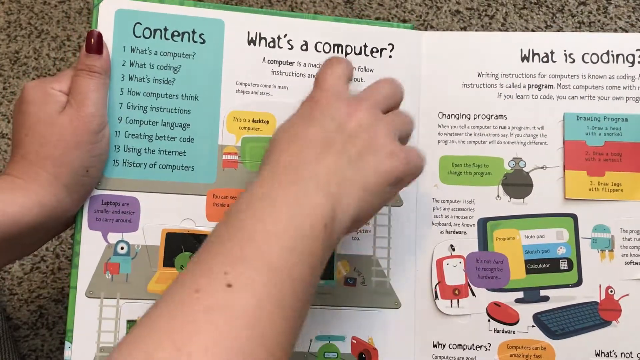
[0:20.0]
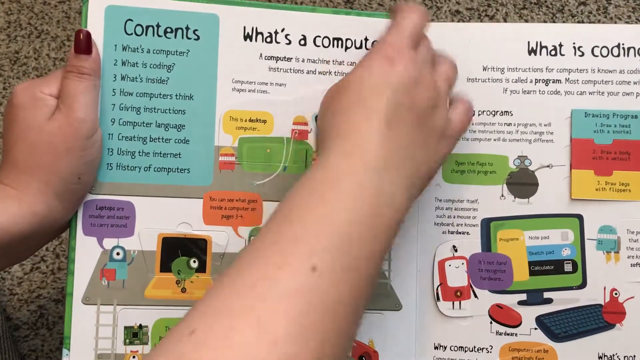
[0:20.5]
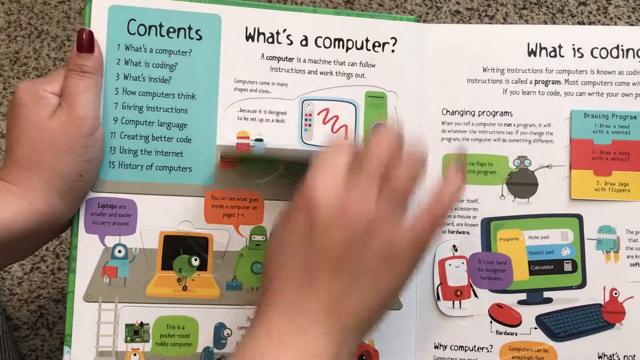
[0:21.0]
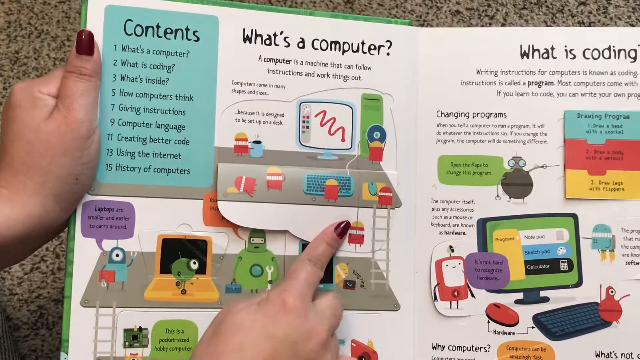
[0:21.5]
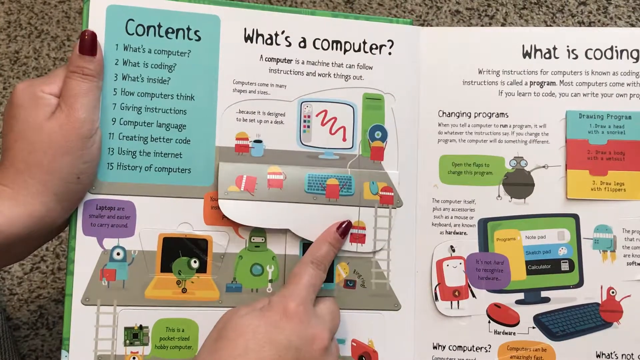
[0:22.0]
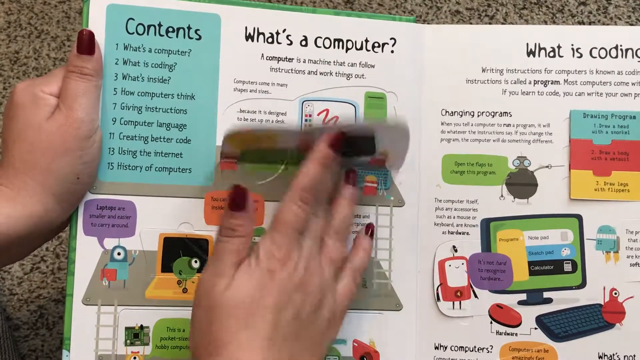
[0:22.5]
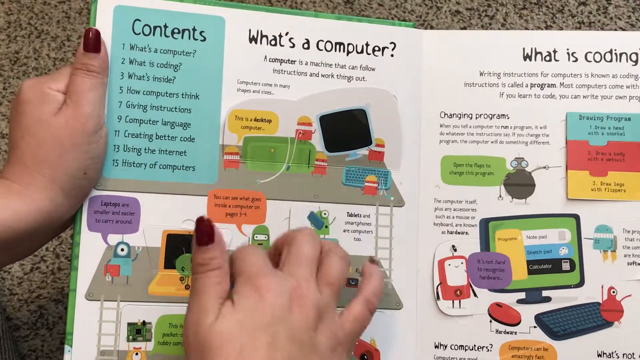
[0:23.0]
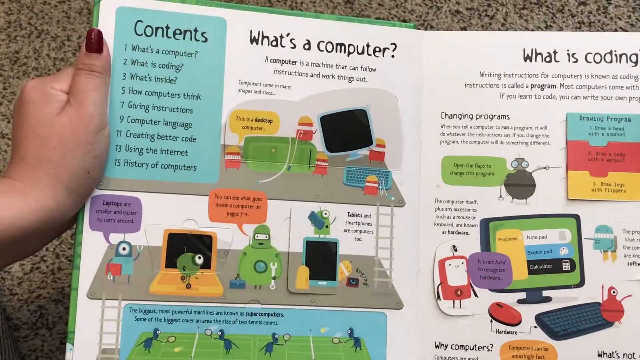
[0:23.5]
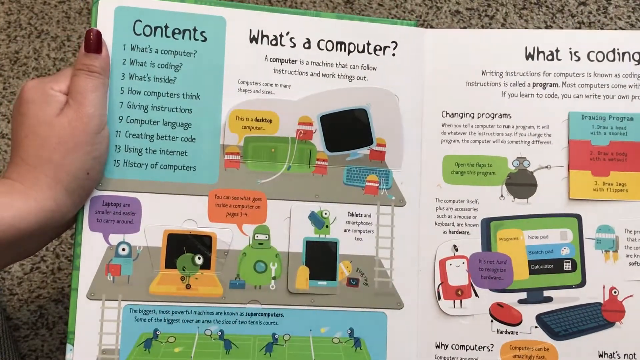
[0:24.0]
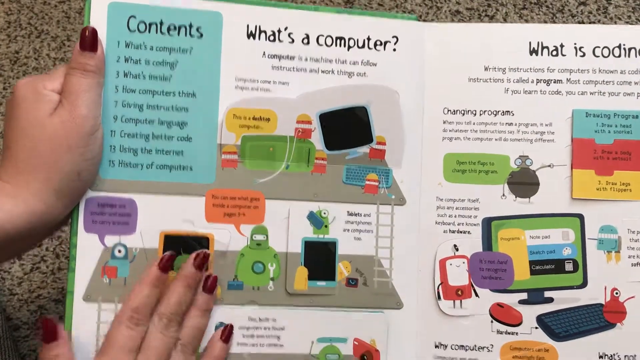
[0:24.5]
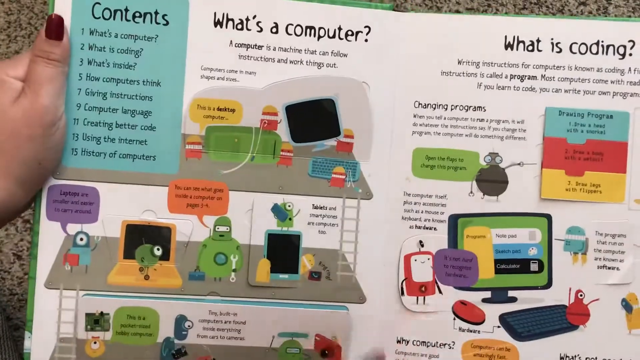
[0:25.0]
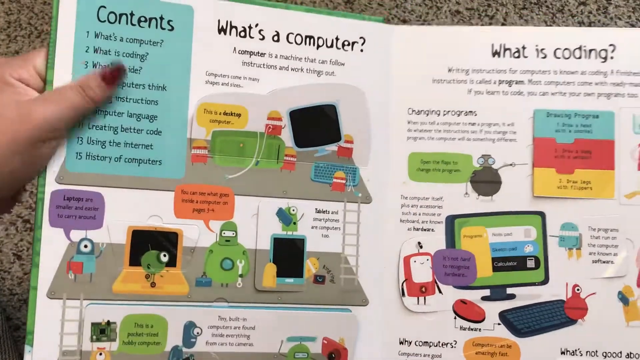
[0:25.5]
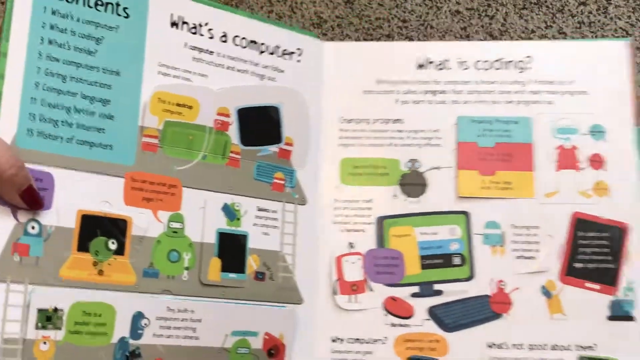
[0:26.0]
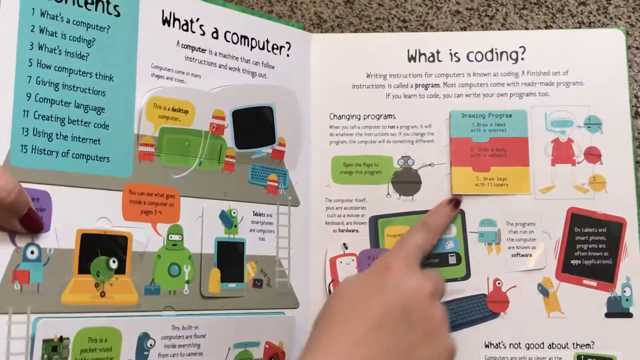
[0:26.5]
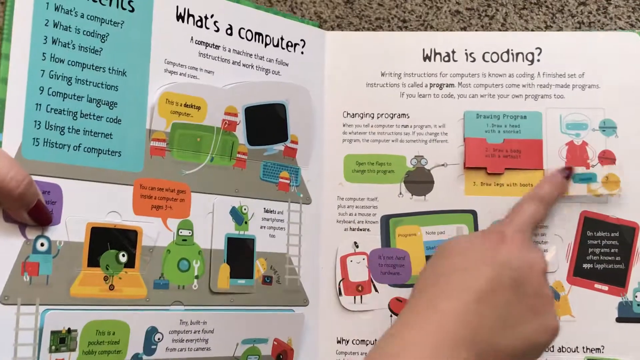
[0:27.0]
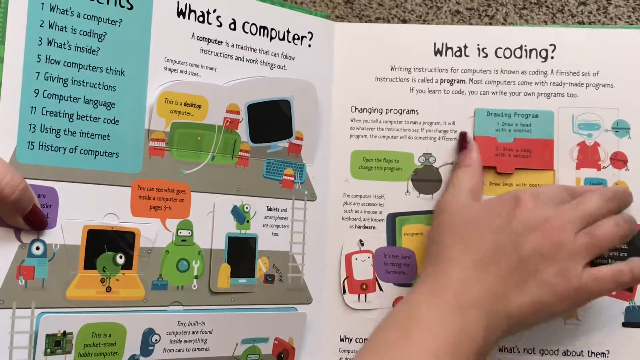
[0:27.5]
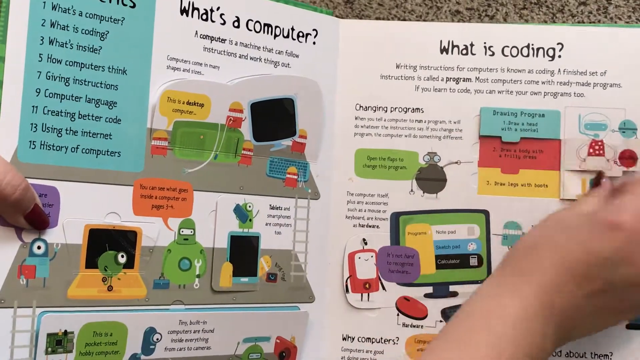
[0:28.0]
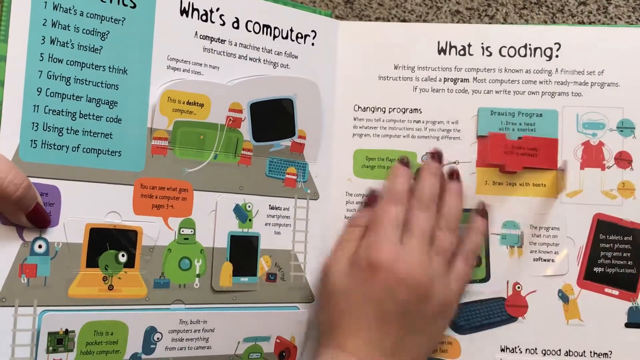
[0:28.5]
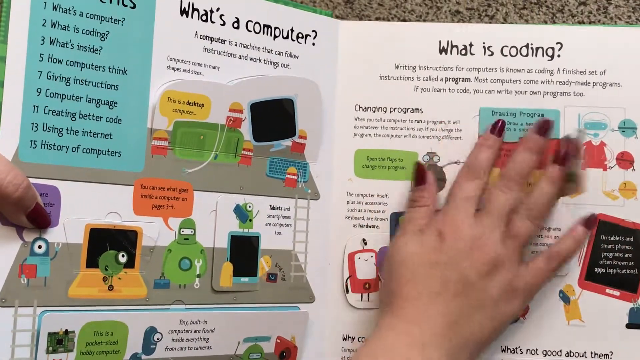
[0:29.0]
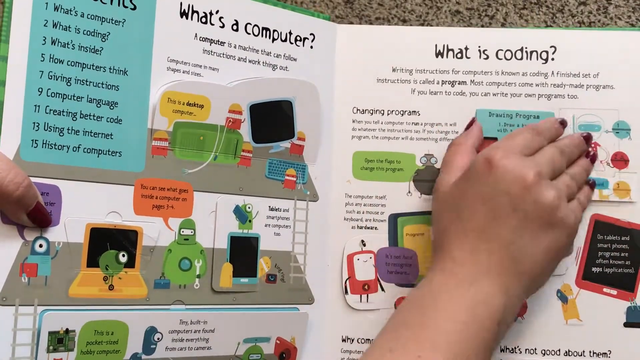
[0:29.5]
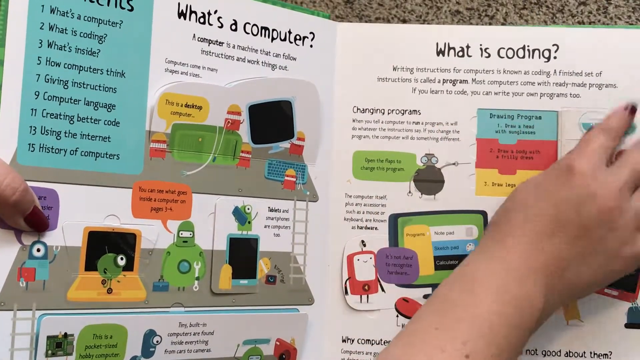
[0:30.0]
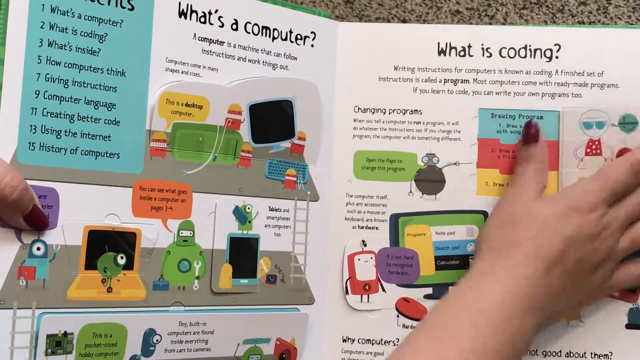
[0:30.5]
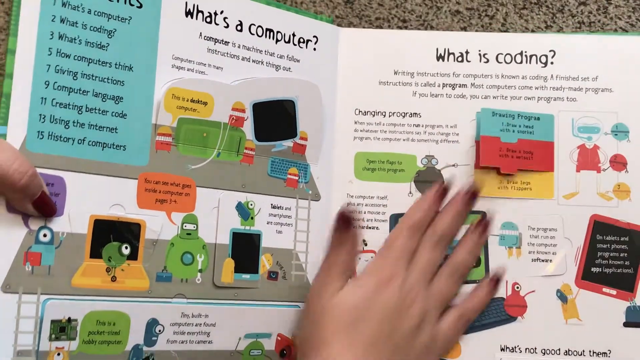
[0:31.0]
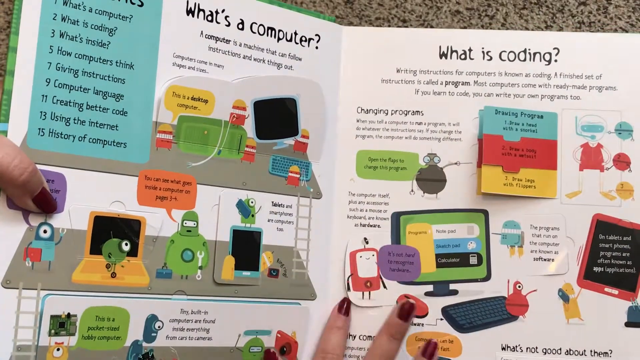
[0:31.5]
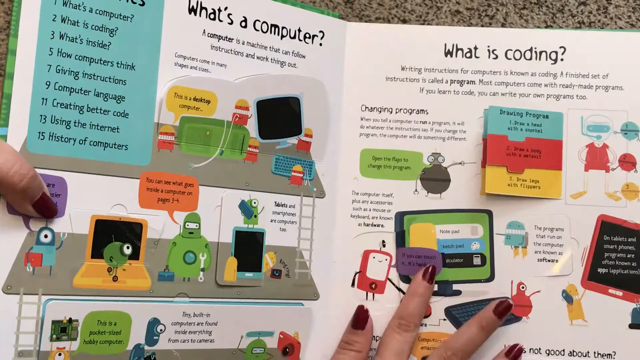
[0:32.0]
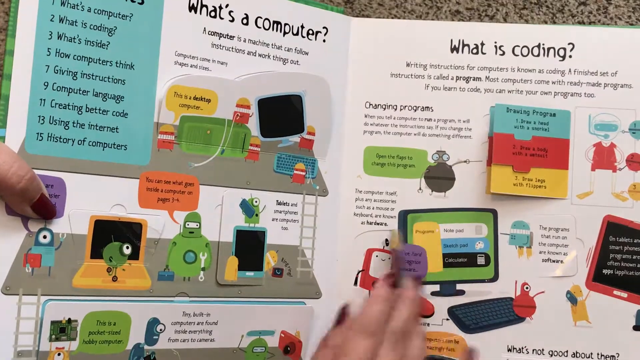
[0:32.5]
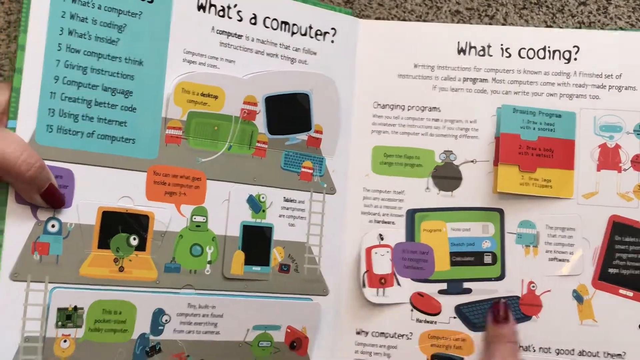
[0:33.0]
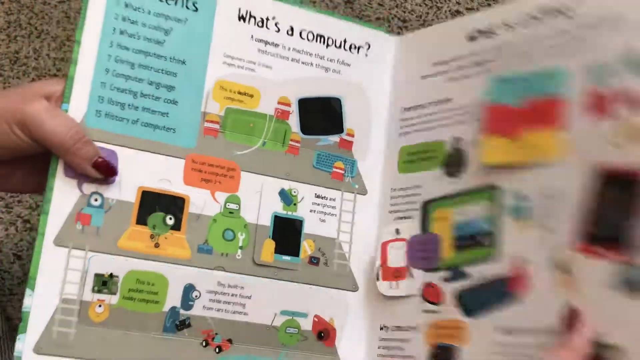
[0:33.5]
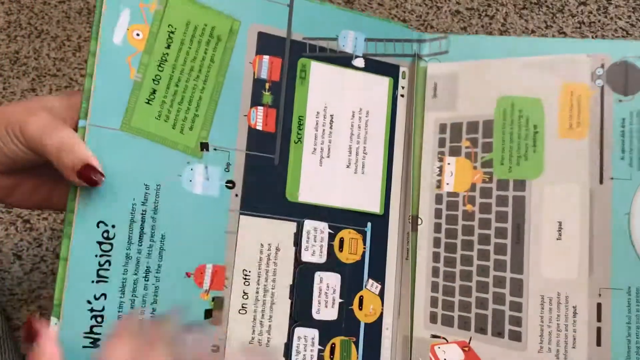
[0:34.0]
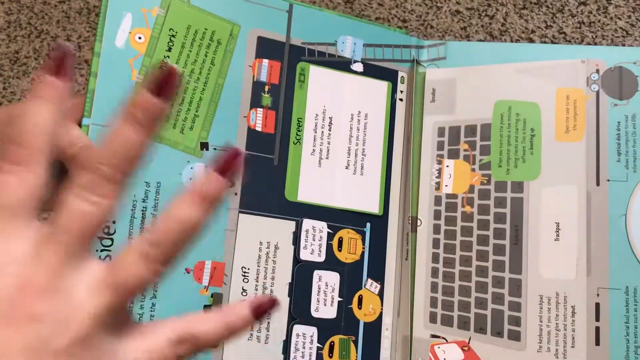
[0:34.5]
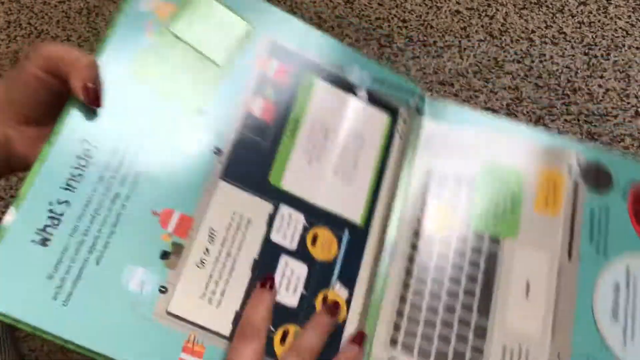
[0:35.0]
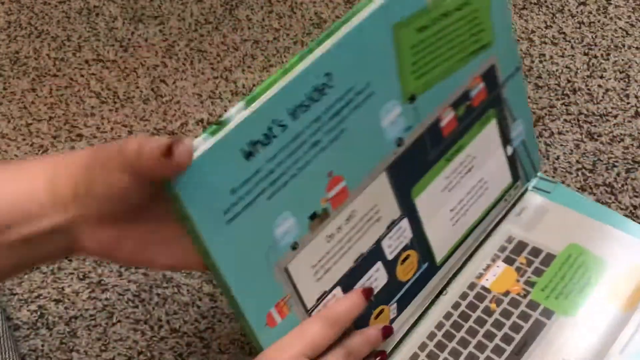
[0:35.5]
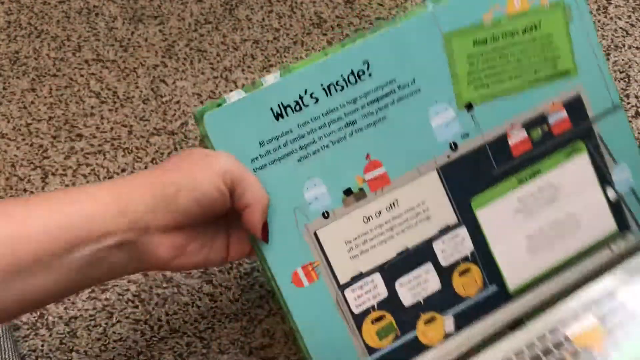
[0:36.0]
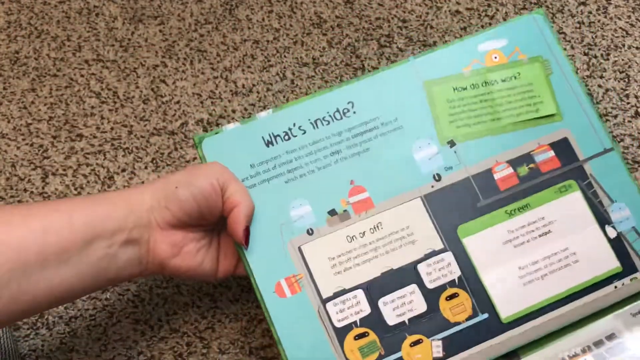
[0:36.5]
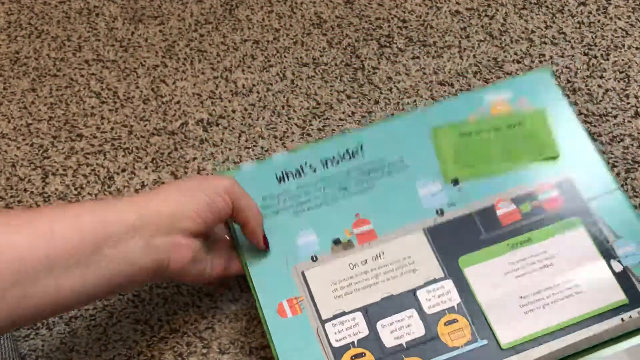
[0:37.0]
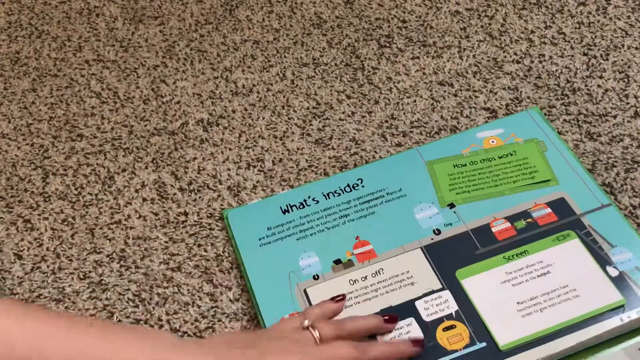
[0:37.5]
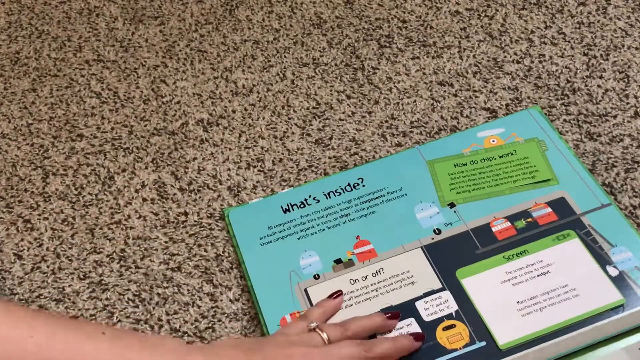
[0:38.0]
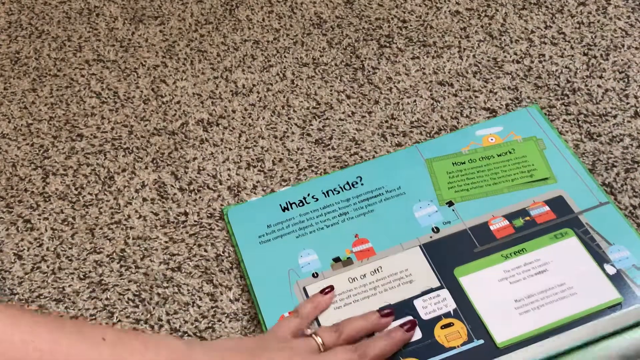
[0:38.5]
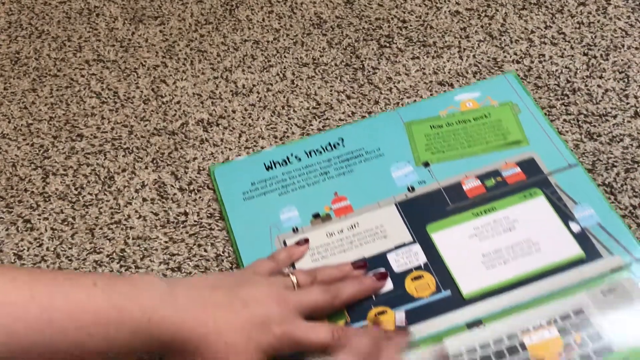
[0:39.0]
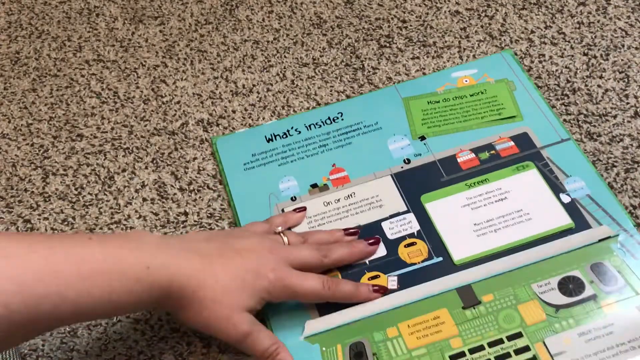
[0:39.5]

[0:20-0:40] Under "What's a computer" there is a flap that the woman pulls down to show an illustration of a desktop, a keyboard and a computer tower, with a bunch of robots crawling on top of it. She points at different parts of the book. On the "What is coding" page she flips the yellow part of the chart or jigsaw puzzle to the side, then the red part, then the blue part. She then closes the book and flips another robot on the same page. On the next page, titled "What's inside", she turns the book on its side; this page also has flaps, and she opens a huge flap at the bottom to reveal the inner workings of a computer, a motherboard with many nodes and other slots on it.